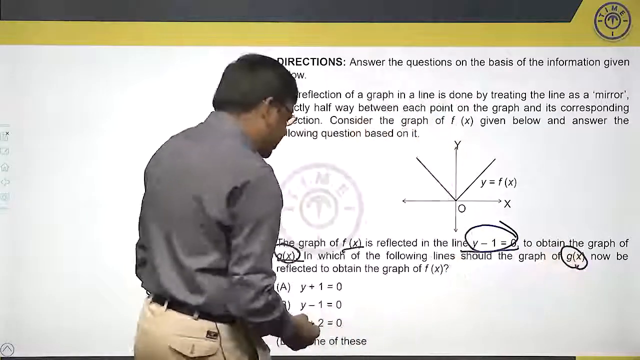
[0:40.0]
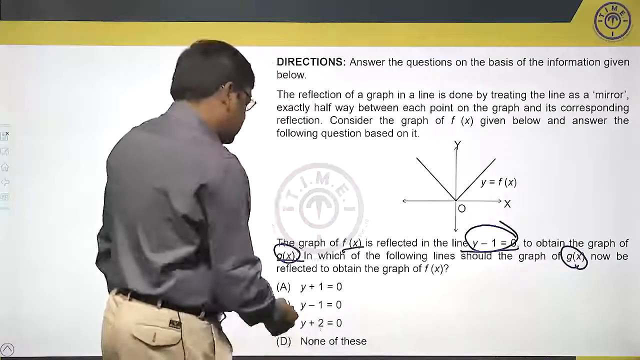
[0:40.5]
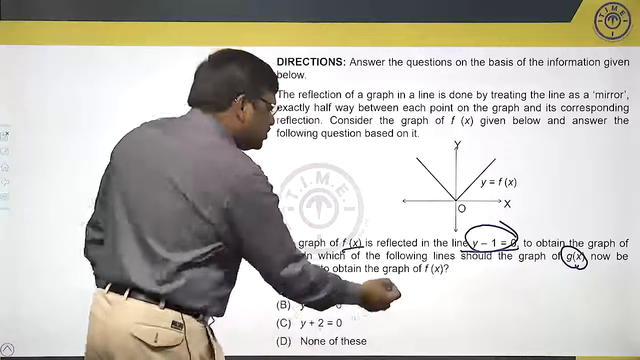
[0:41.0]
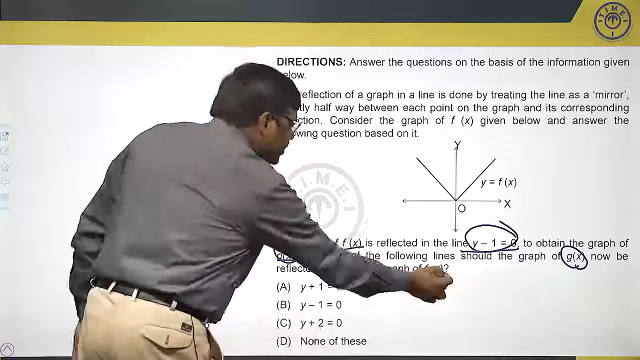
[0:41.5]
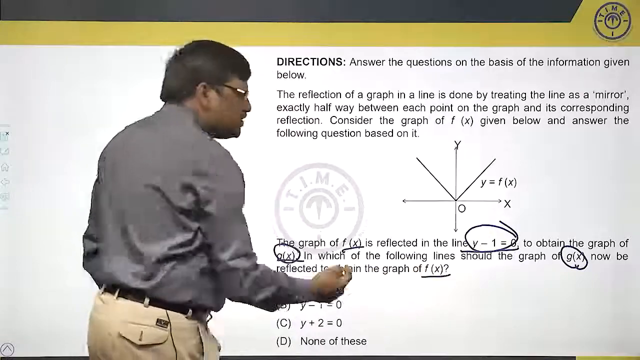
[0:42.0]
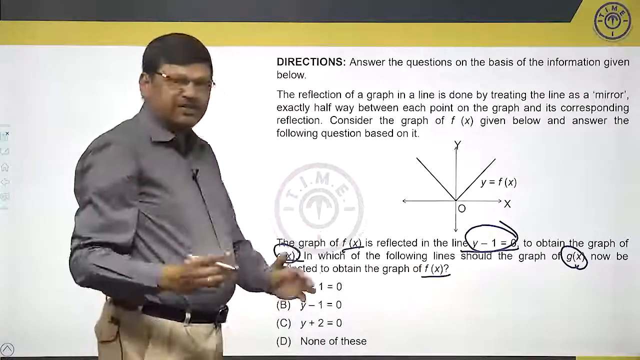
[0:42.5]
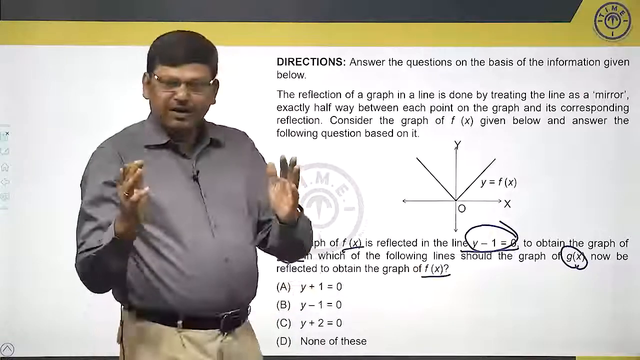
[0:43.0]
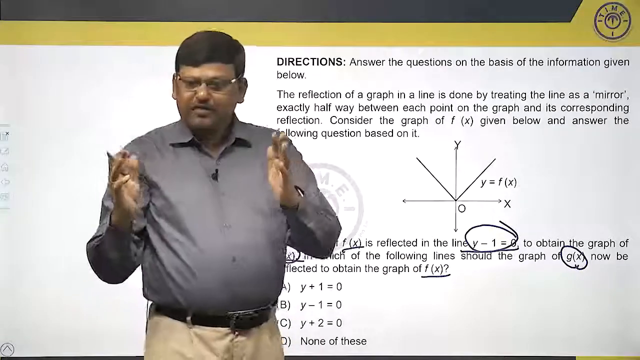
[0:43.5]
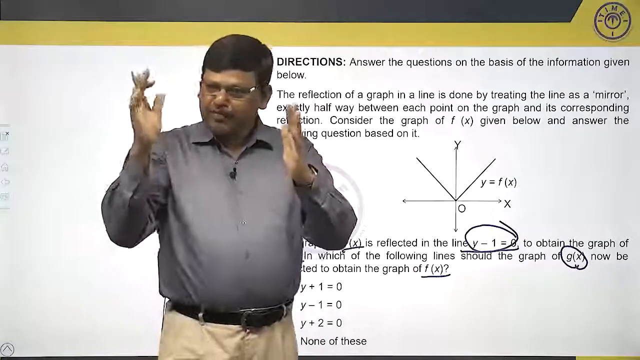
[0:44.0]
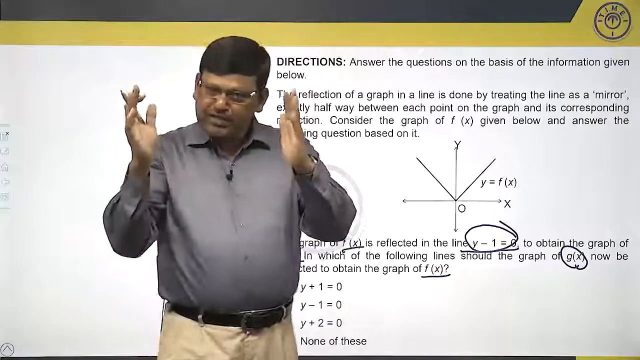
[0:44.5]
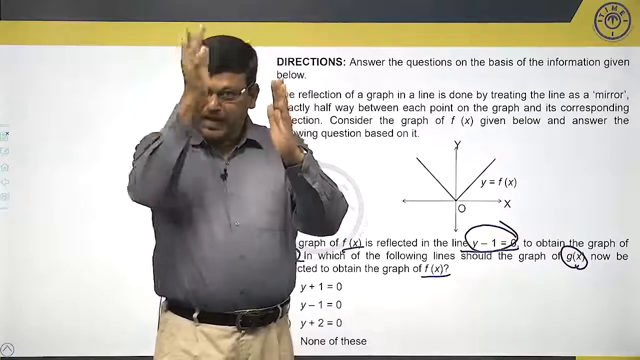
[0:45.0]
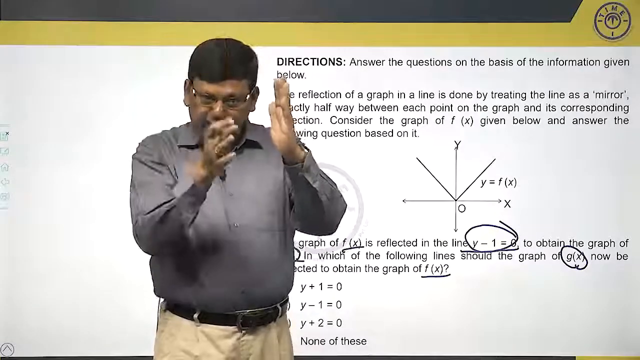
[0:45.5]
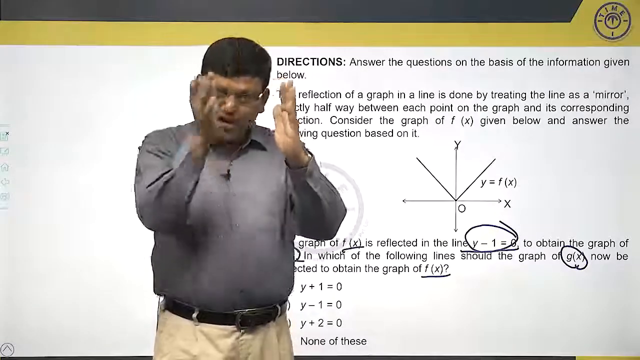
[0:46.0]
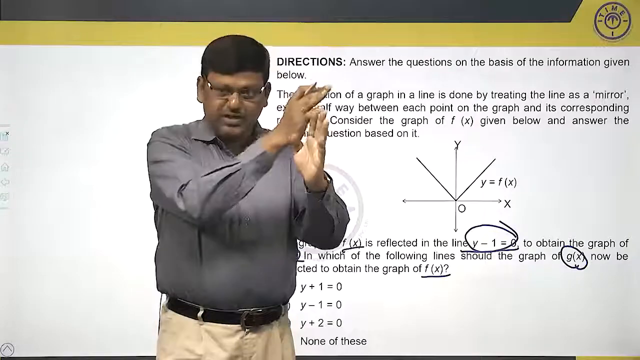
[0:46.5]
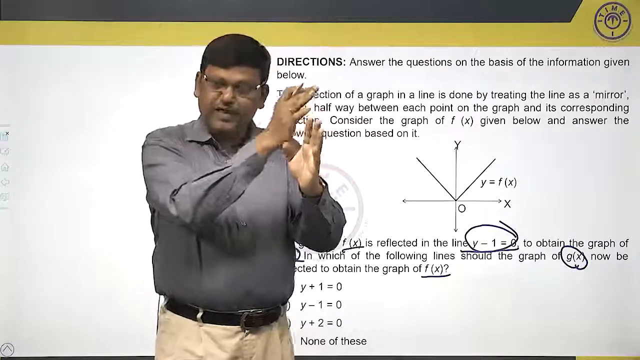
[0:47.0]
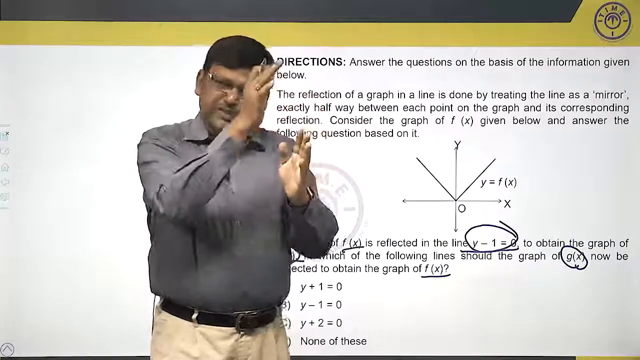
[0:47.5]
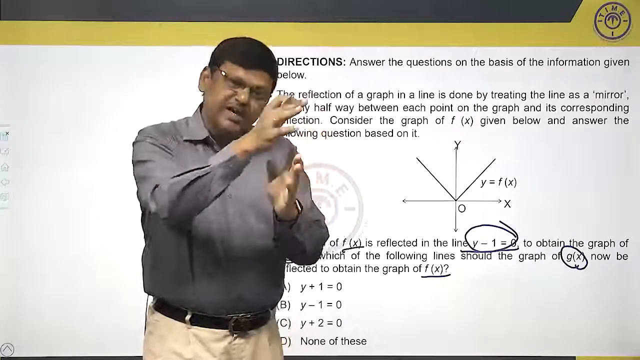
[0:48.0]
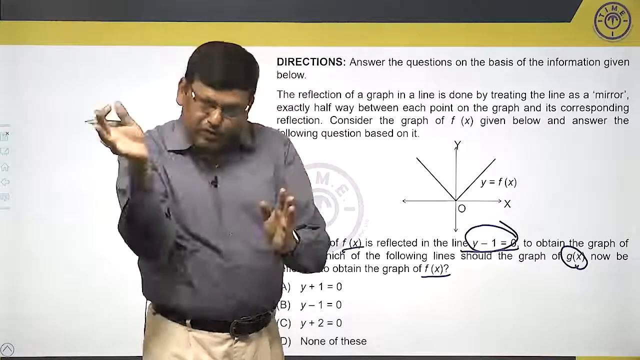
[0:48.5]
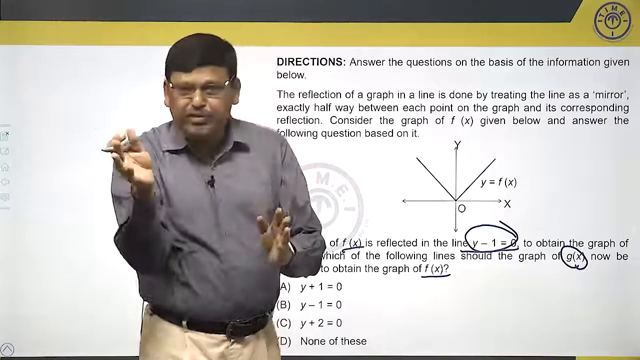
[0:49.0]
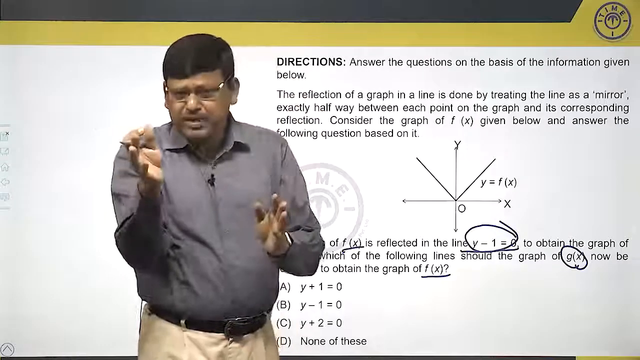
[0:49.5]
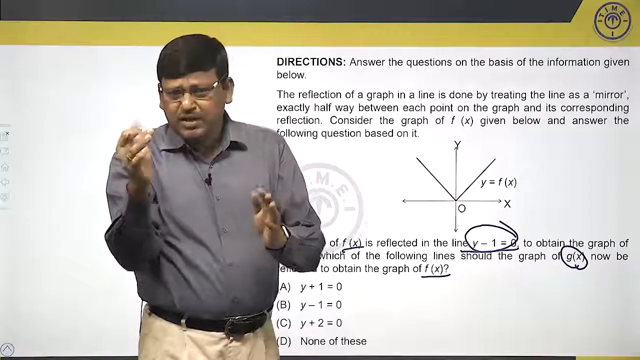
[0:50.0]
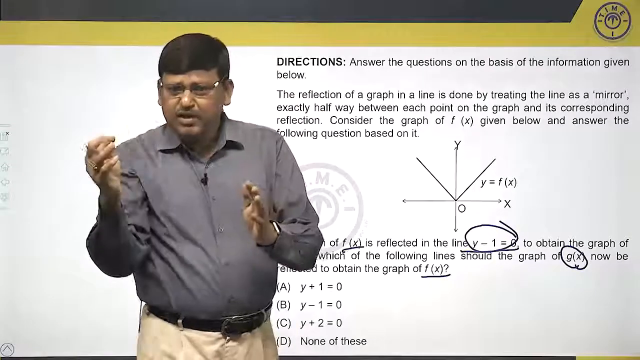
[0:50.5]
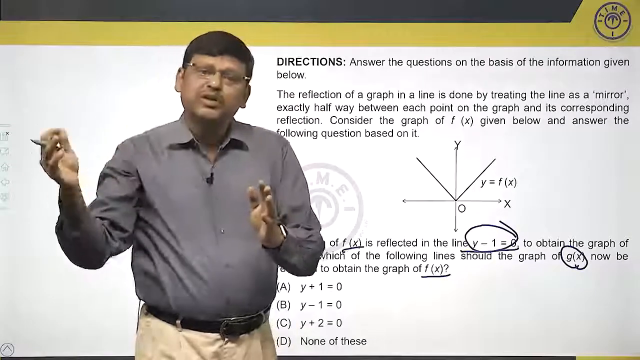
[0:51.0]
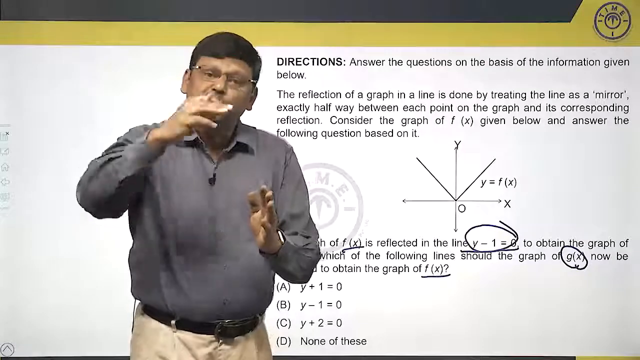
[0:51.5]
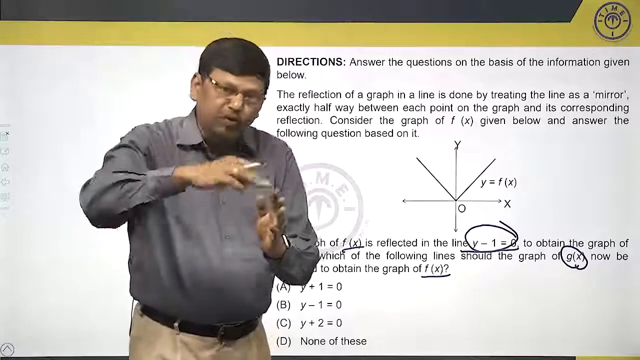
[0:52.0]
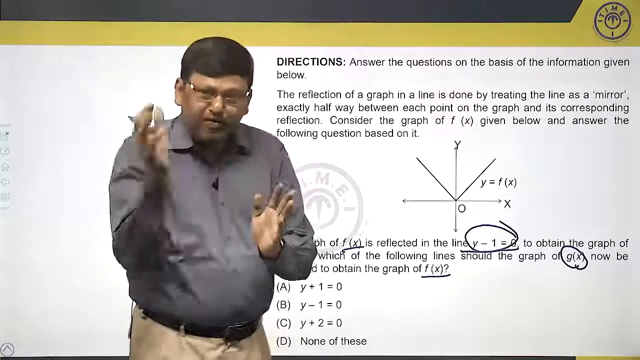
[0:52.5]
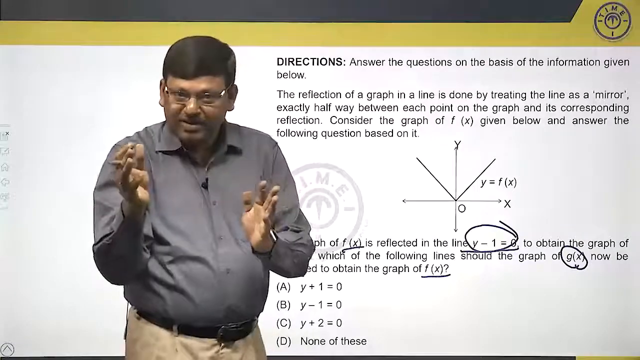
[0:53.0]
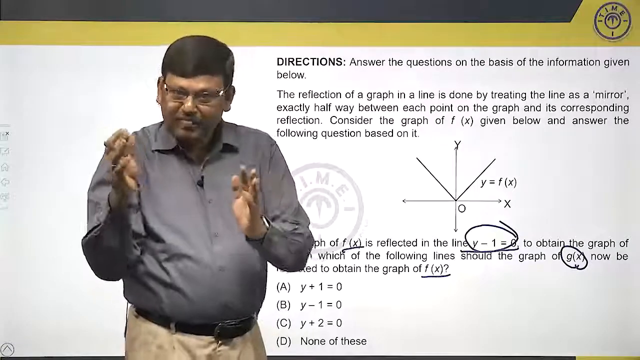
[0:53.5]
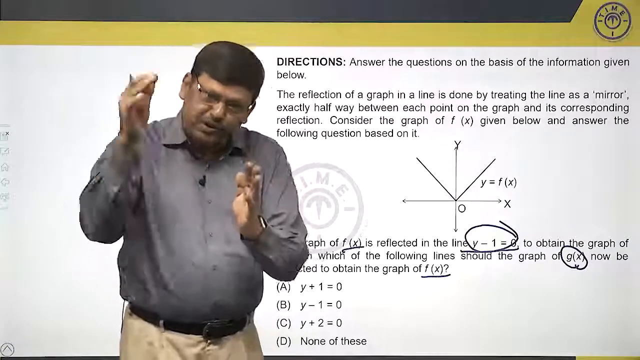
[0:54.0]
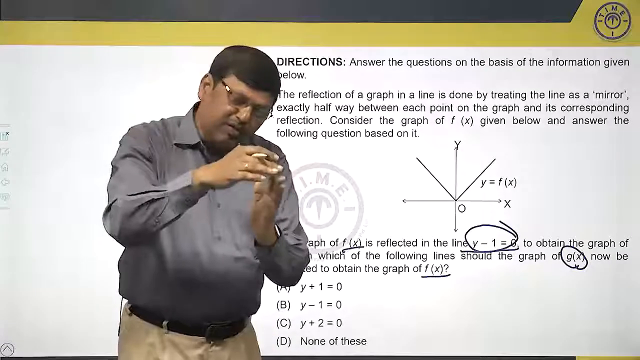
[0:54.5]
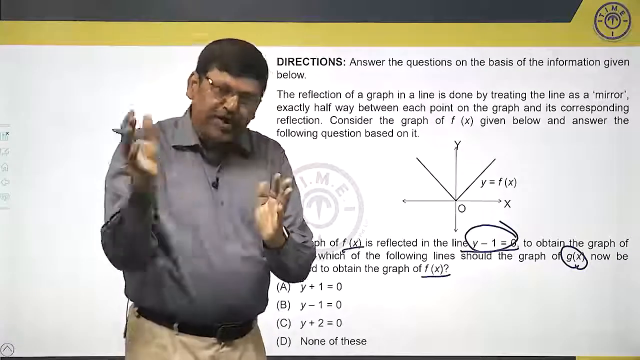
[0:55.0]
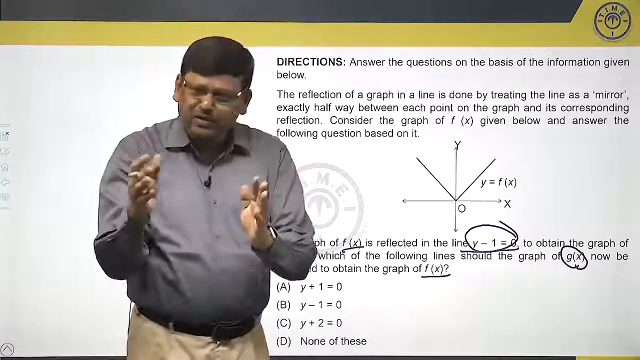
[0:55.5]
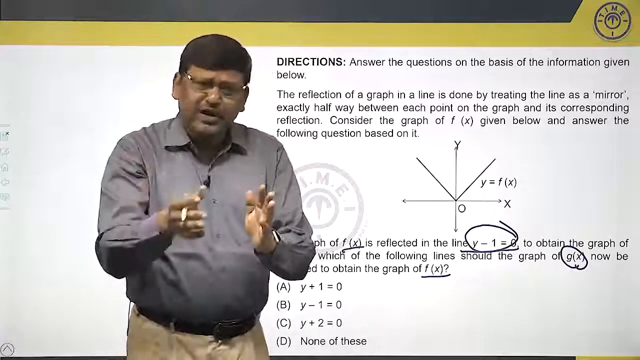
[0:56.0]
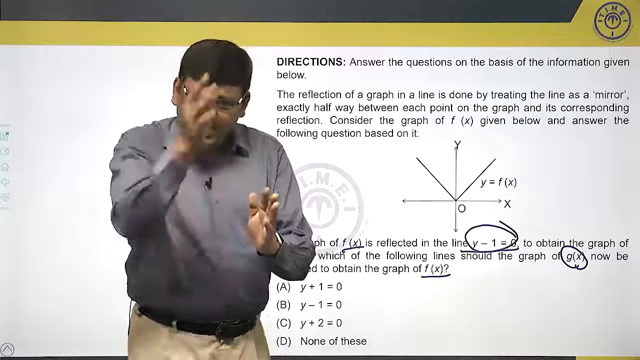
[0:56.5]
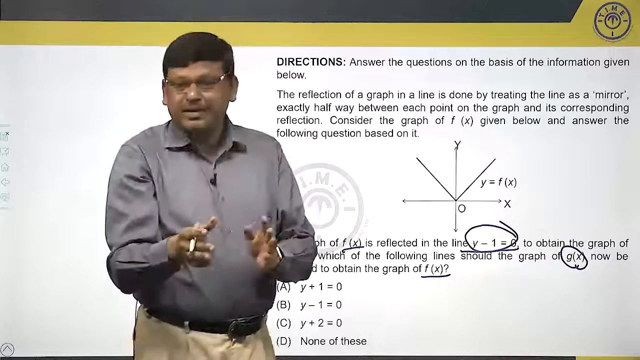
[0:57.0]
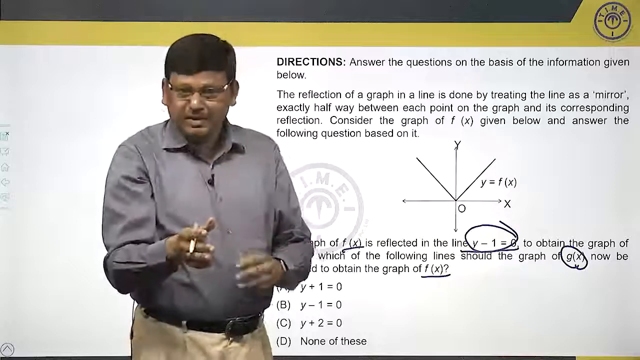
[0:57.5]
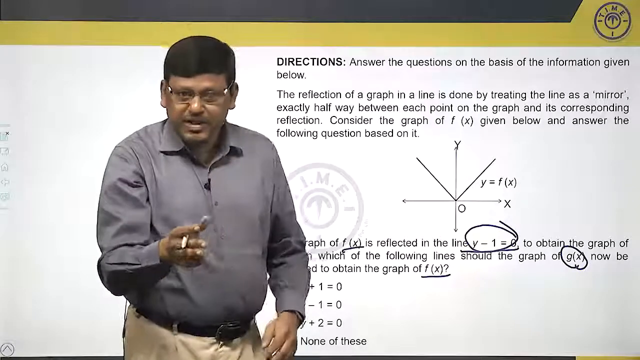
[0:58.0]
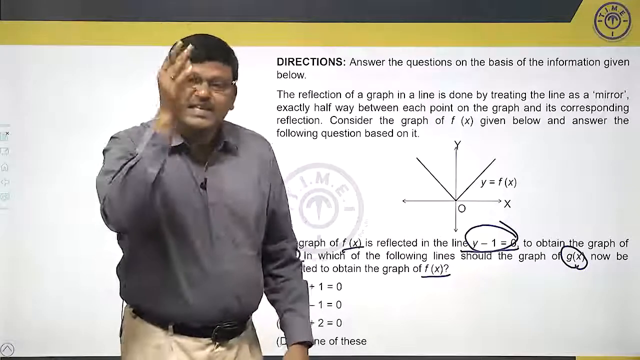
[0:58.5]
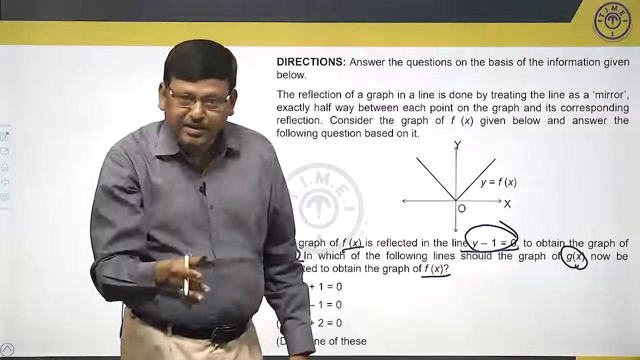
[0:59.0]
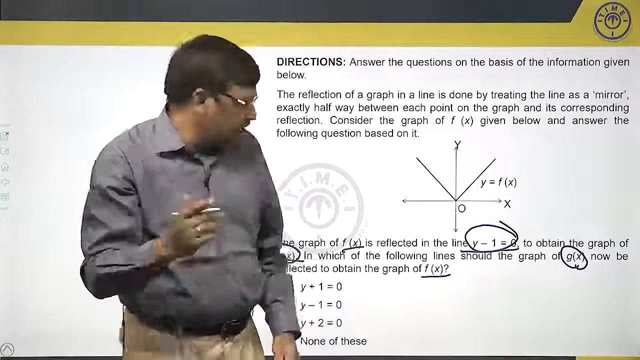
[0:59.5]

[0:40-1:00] The Indian presenter, wearing glasses, looks directly at the camera and gestures with his left and right hands. The pen stays in his right hand as he gestures with both hands oriented vertically, as if talking about flipping the graph from side to side, moving his right hand from the left side of his body to the right side to emphasize the gesture. He then moves his hand vertically from top to bottom, likely denoting the Y axis of the graph. Next he points to the line Y-1 equals 0 in the question stem before turning around and looking at the screen. He appears to be explaining the key parts of the question and what information is needed to solve it.